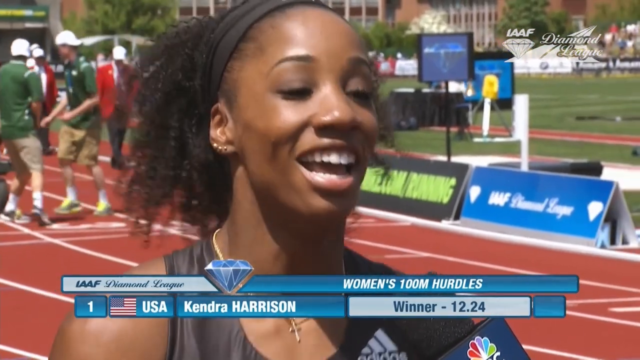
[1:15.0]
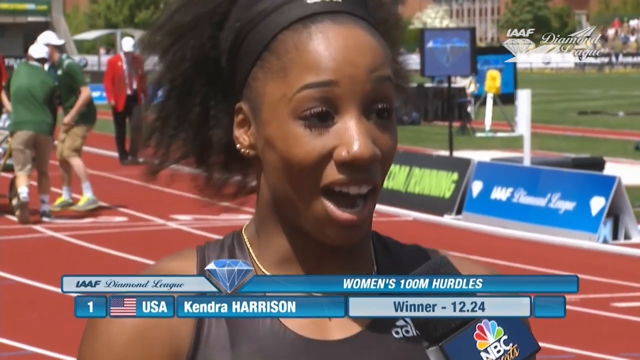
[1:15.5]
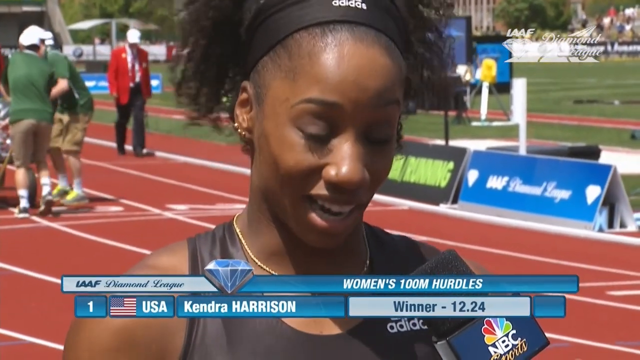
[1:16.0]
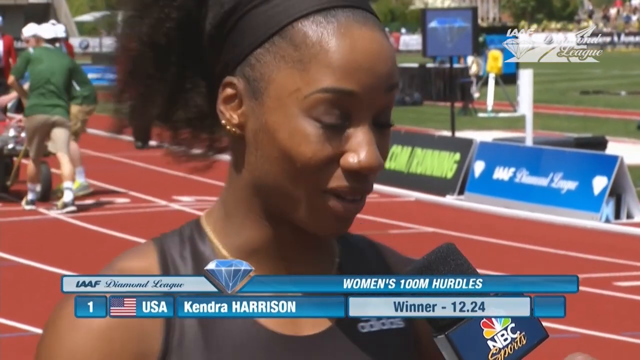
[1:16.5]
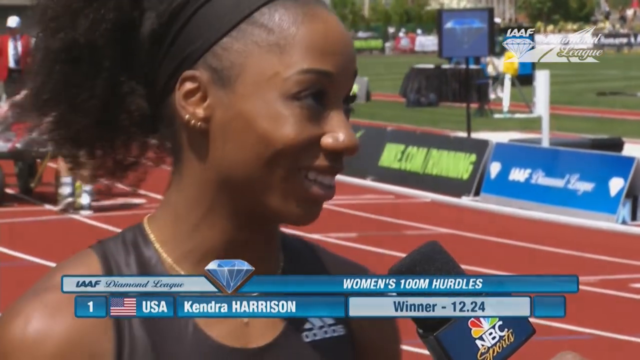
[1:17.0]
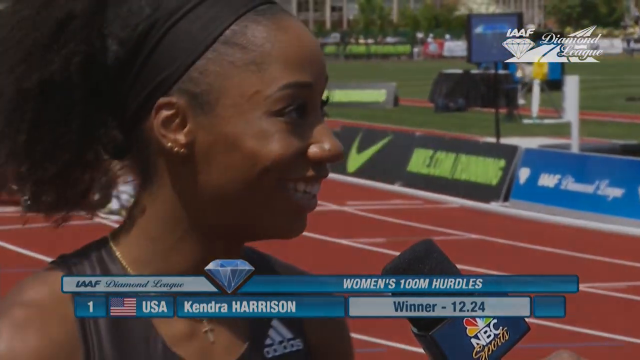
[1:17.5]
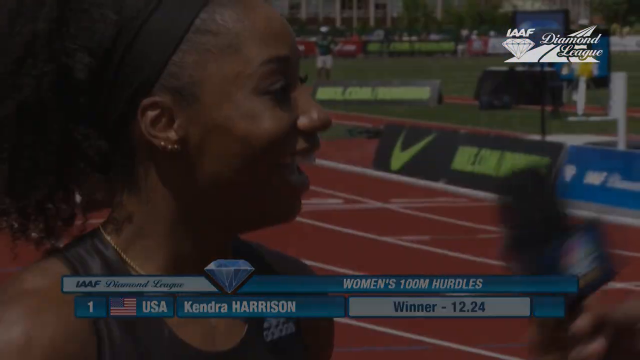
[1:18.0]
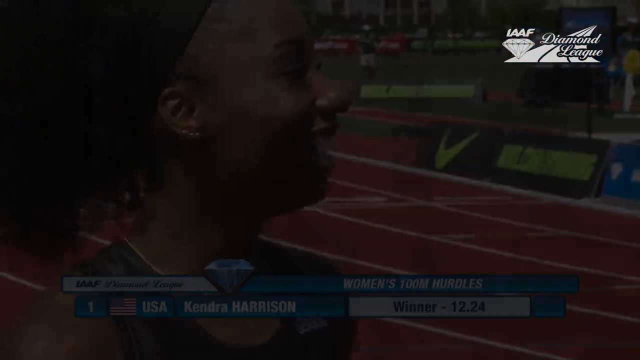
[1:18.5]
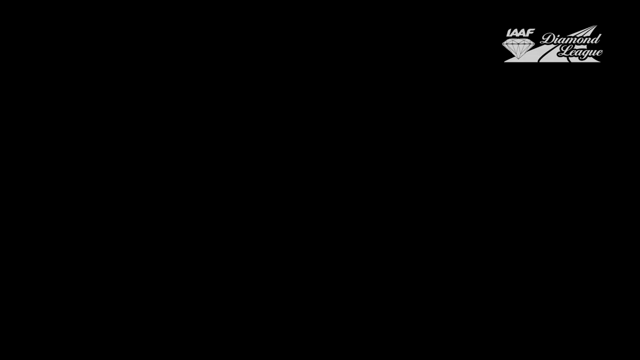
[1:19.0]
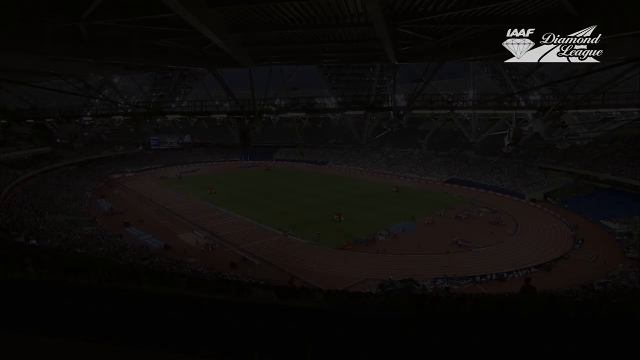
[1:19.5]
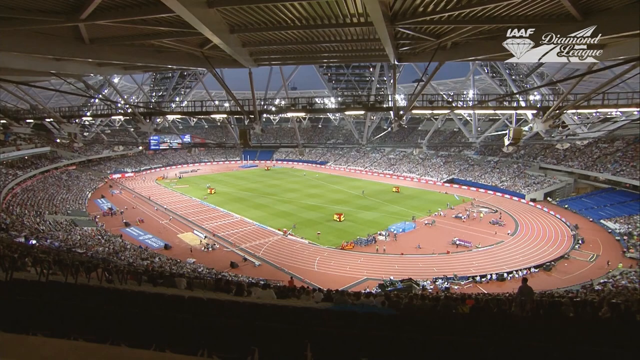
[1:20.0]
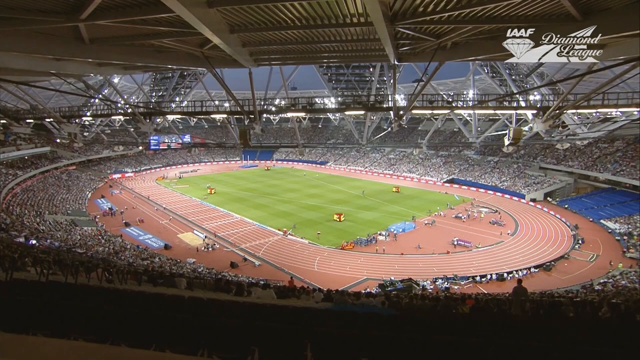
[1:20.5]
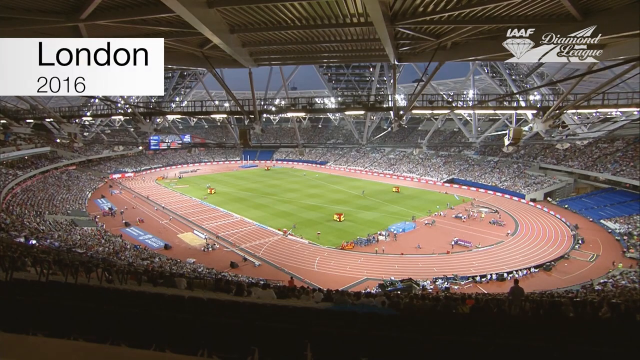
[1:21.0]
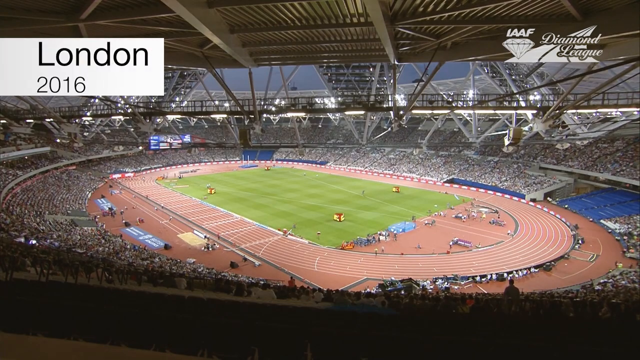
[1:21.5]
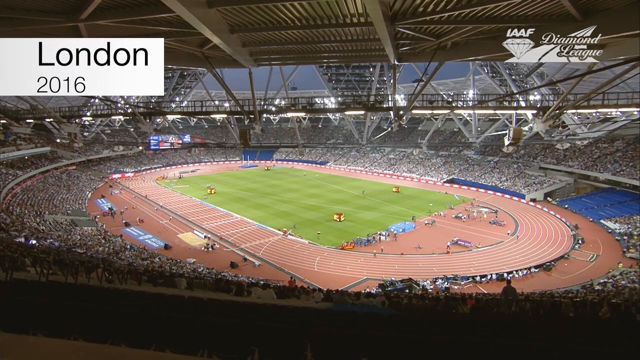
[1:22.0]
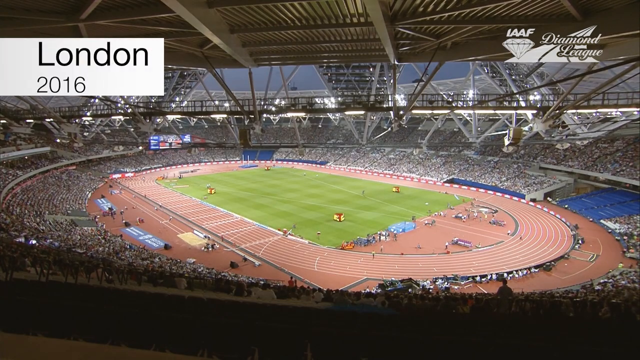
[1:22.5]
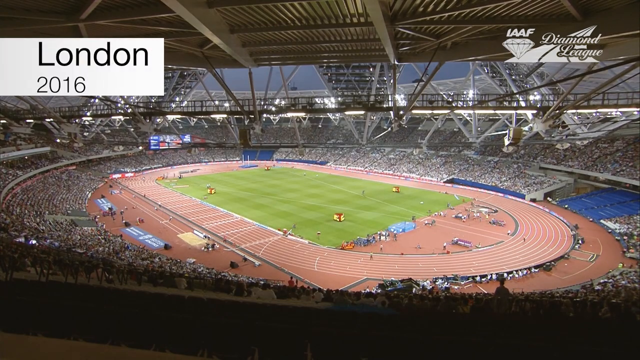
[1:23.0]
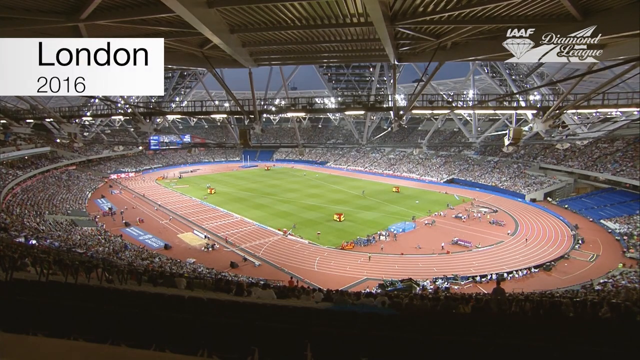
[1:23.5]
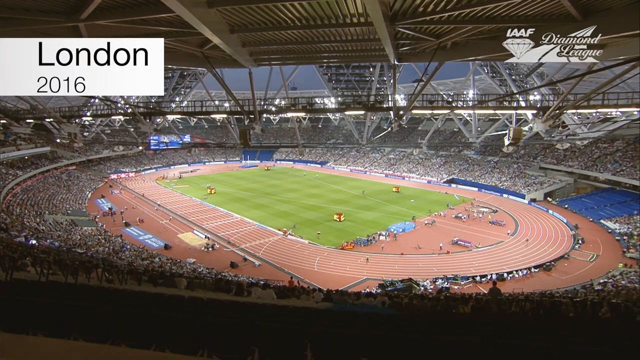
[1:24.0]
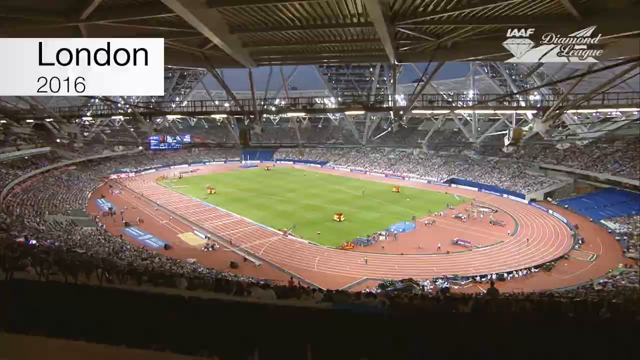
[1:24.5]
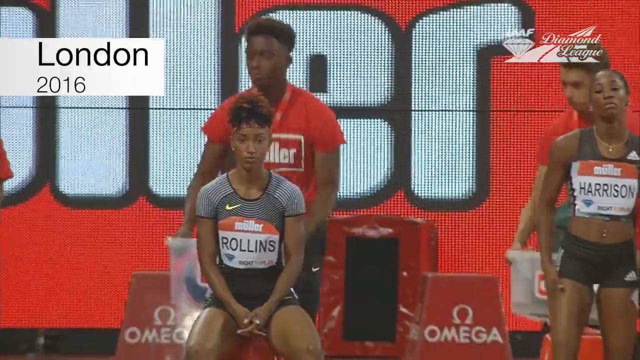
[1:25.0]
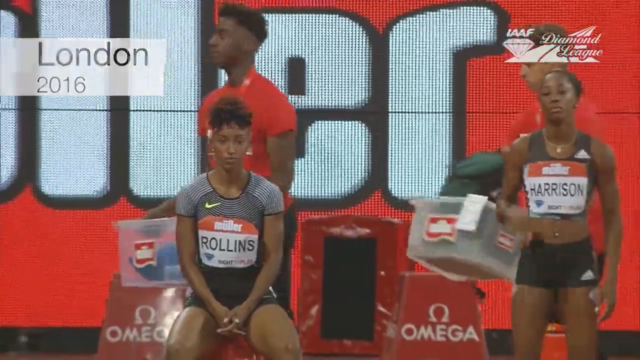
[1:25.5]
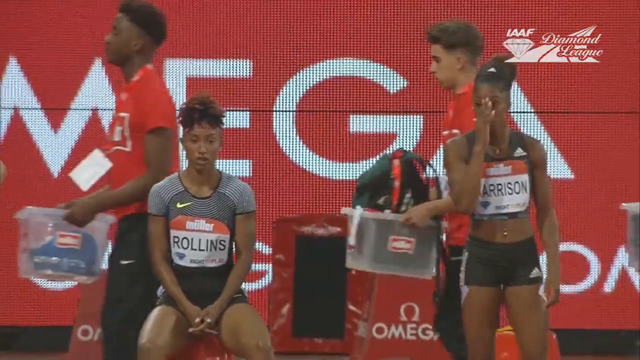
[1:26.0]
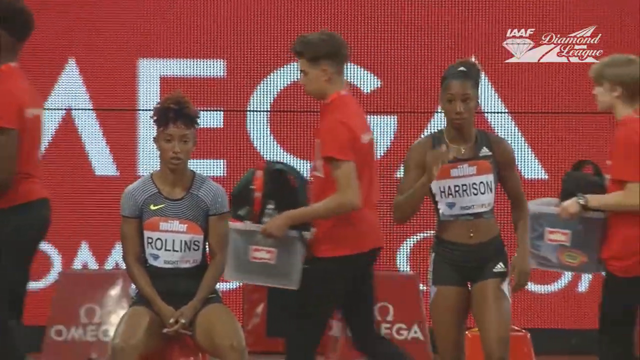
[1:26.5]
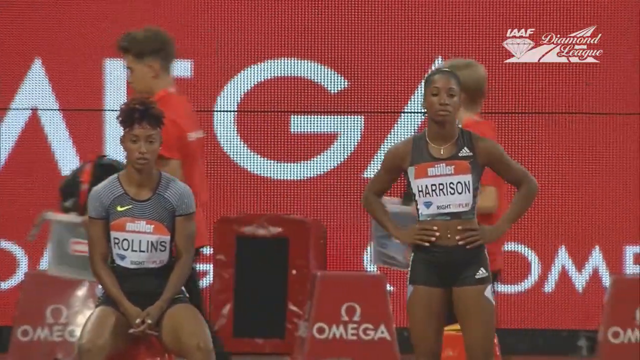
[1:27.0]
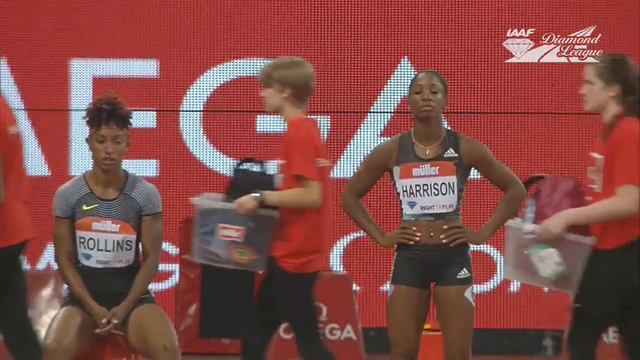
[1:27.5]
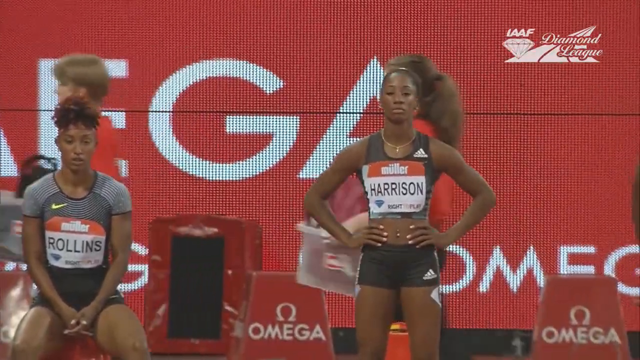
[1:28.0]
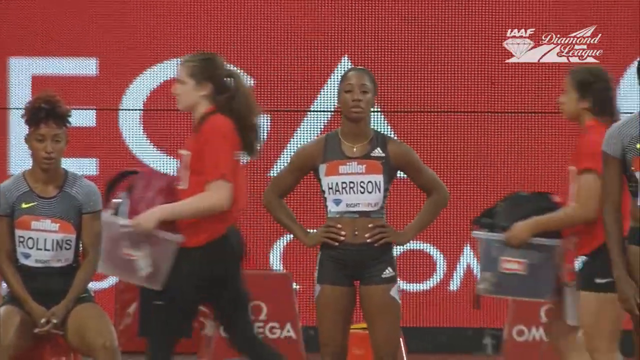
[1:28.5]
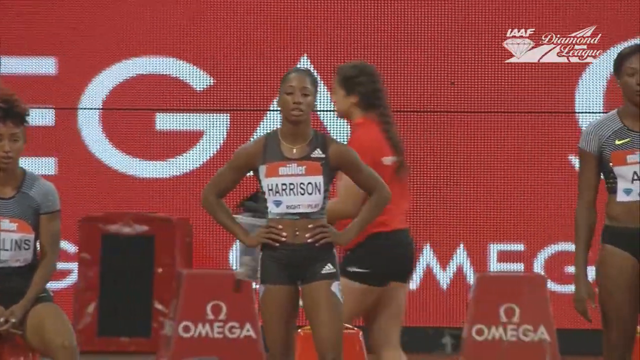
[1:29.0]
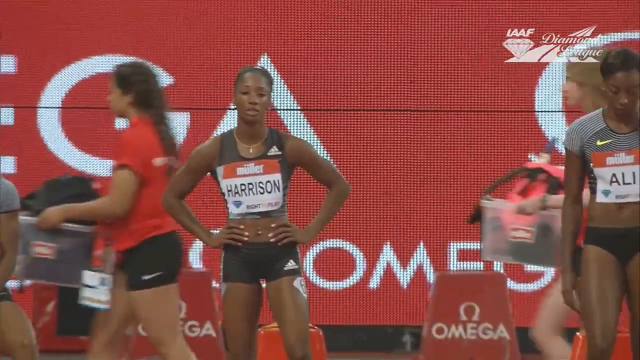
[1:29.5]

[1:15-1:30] The video begins with the close of the previous event's winner and her celebratory interview. An event from London follows, opening with a wide shot of the field and a graphic that reads "London 2016". It then cuts to a new event, presumably in a new location; it is still a women's event, but all the runners are wearing red. Behind the runners is Omega branding, and the graphic in the top right still reads "IAAF Diamond League".